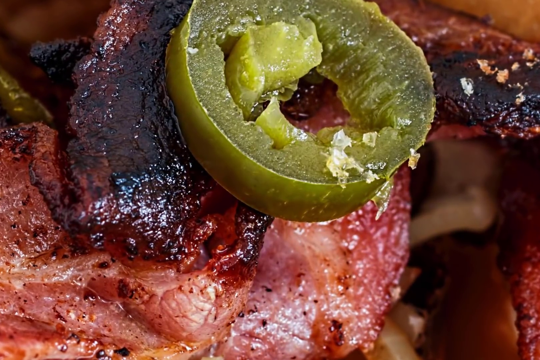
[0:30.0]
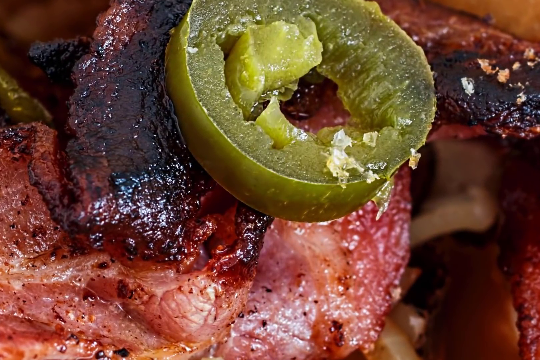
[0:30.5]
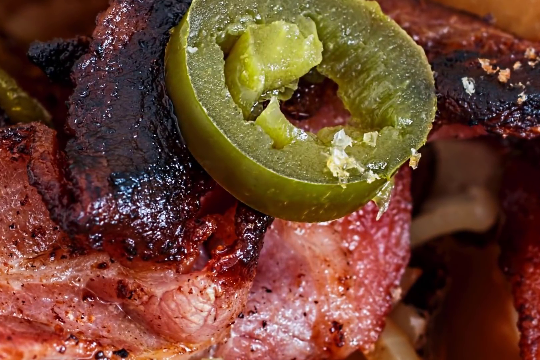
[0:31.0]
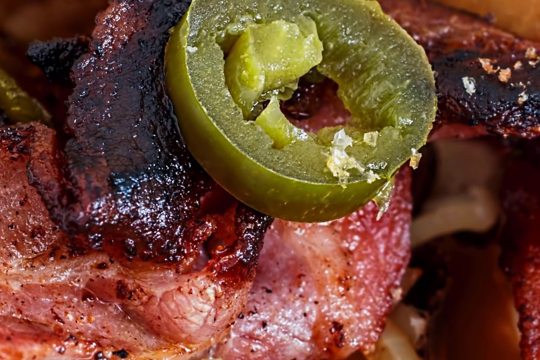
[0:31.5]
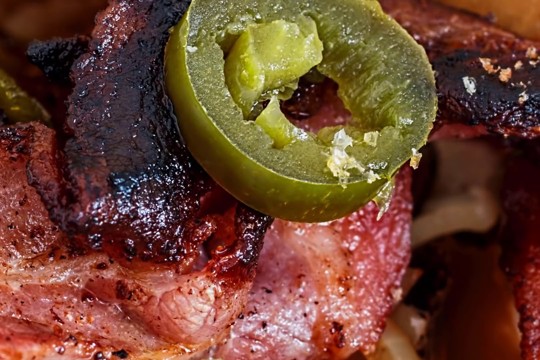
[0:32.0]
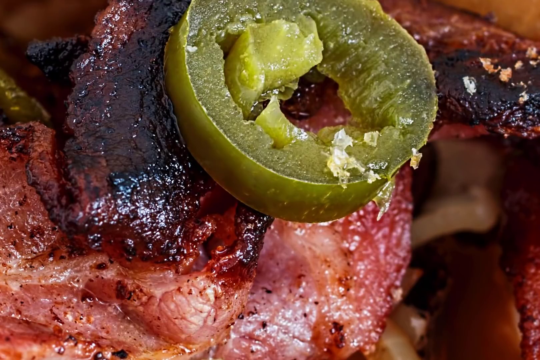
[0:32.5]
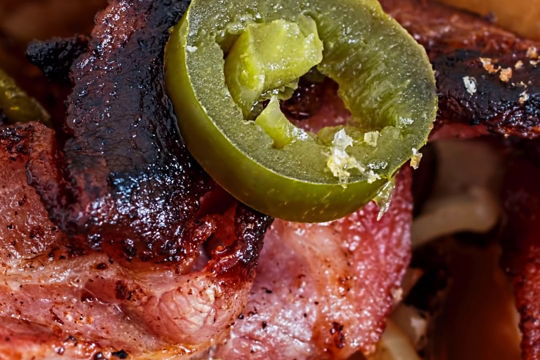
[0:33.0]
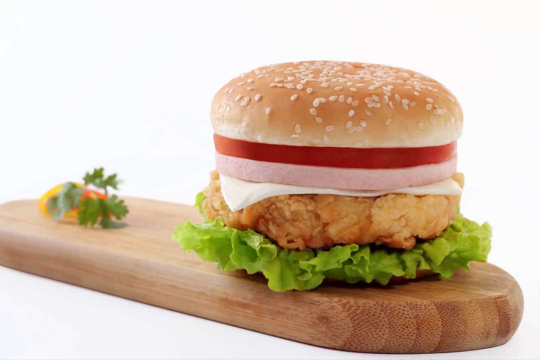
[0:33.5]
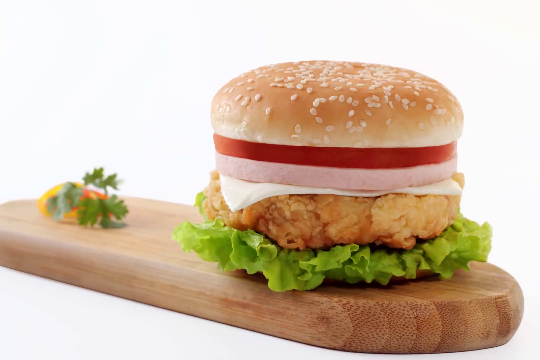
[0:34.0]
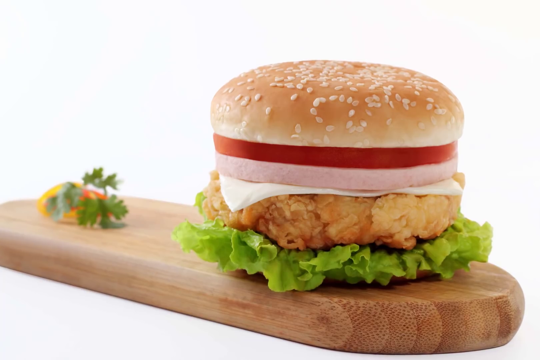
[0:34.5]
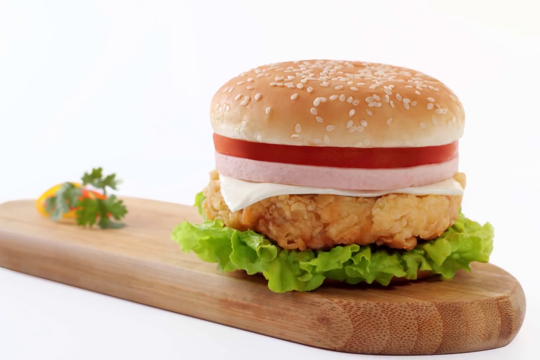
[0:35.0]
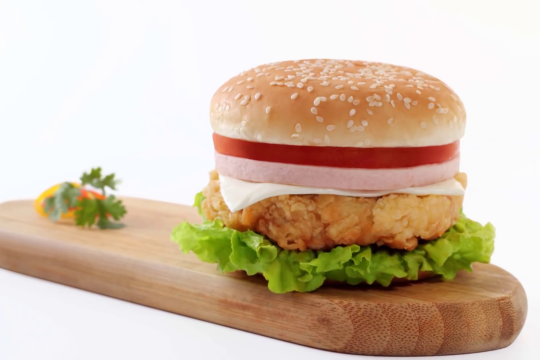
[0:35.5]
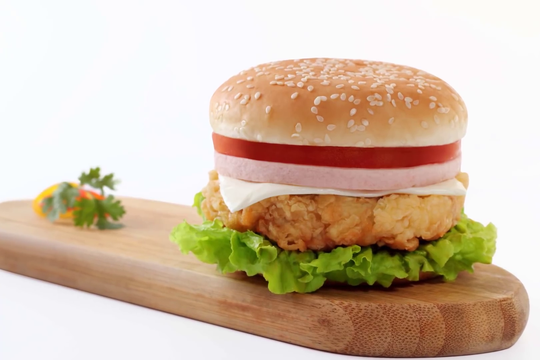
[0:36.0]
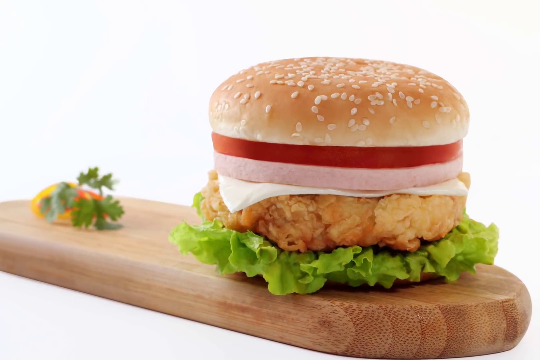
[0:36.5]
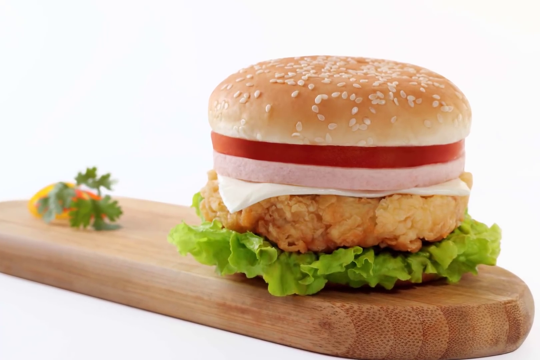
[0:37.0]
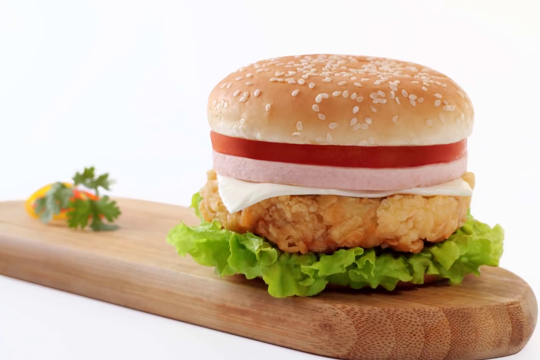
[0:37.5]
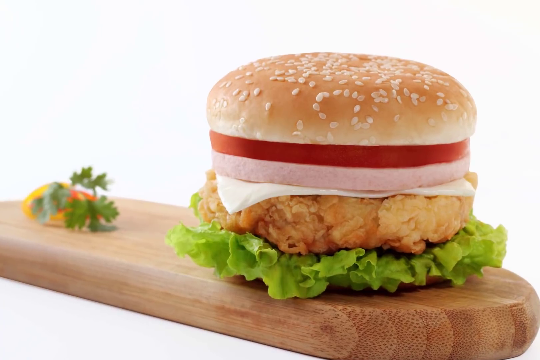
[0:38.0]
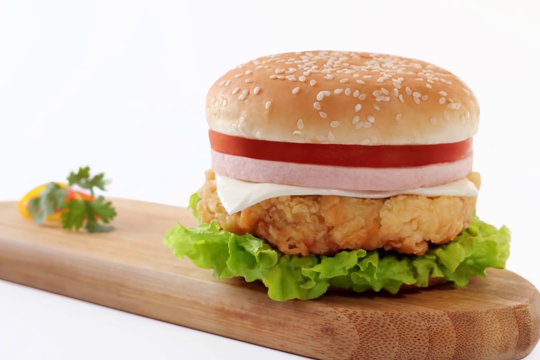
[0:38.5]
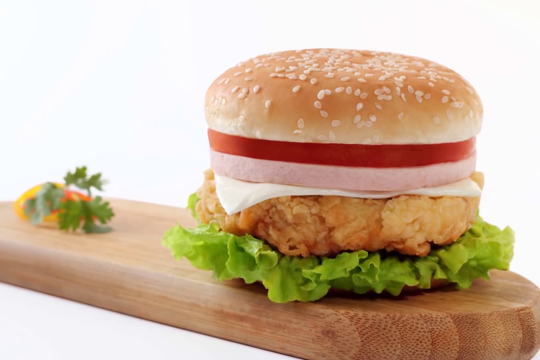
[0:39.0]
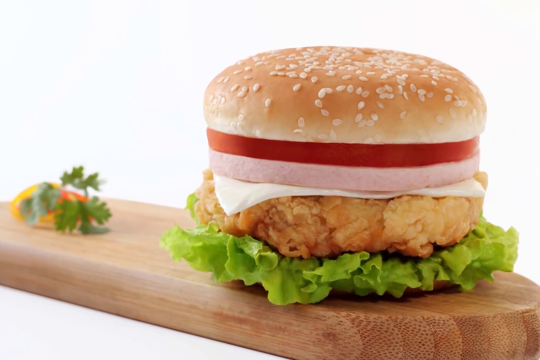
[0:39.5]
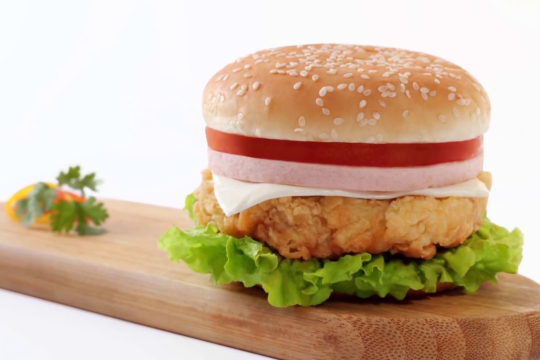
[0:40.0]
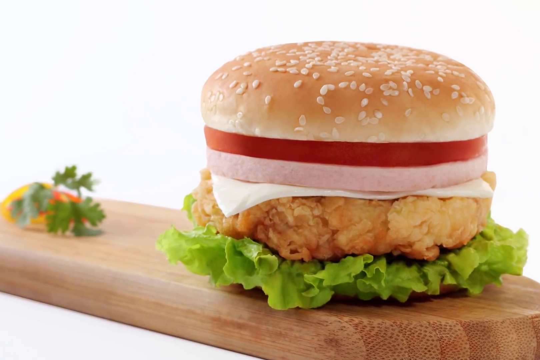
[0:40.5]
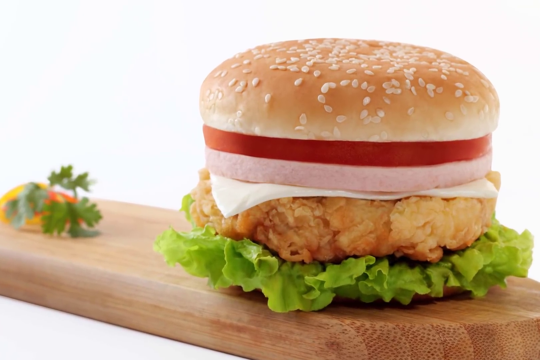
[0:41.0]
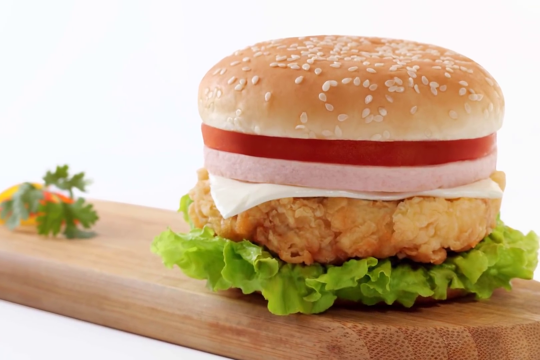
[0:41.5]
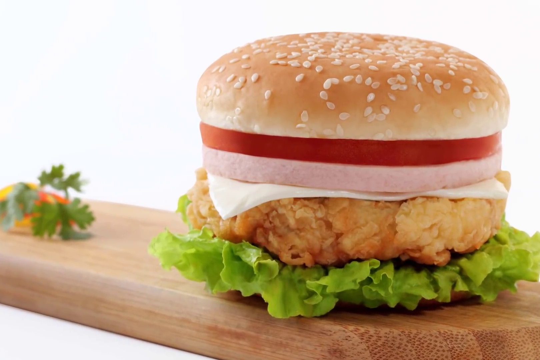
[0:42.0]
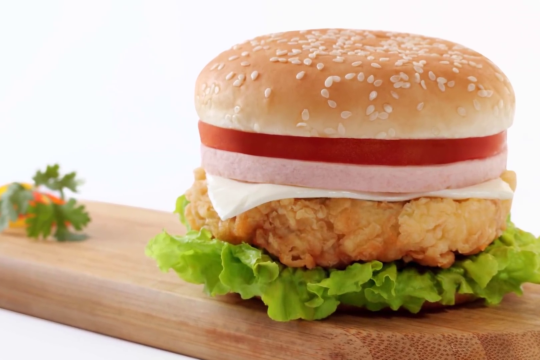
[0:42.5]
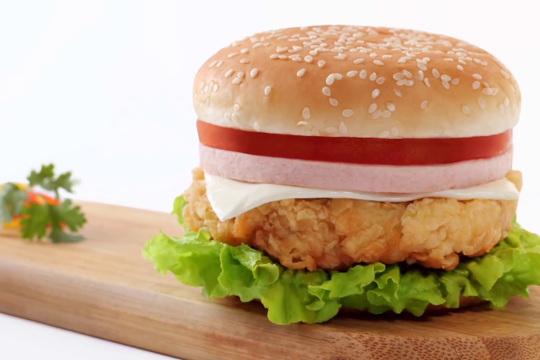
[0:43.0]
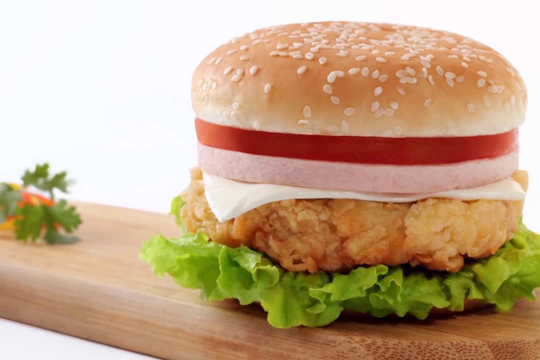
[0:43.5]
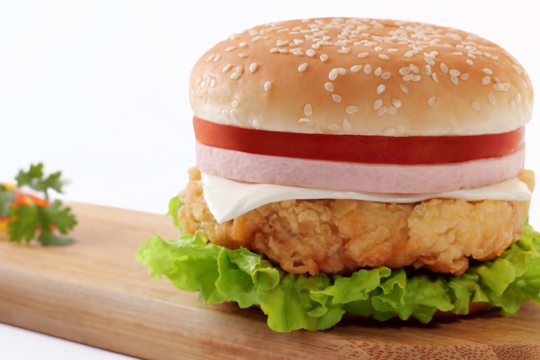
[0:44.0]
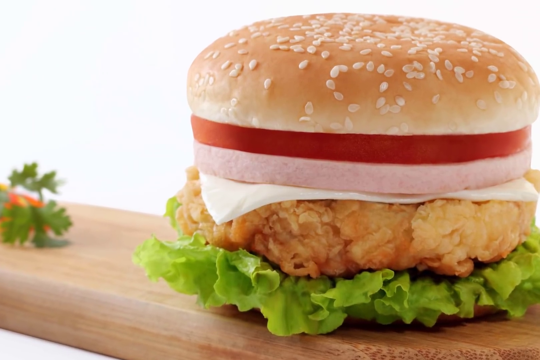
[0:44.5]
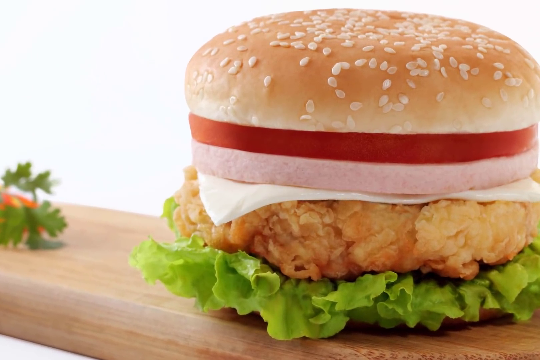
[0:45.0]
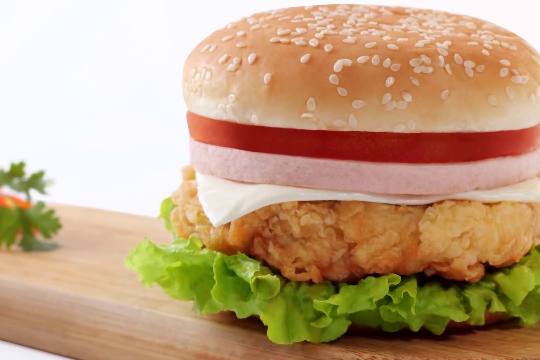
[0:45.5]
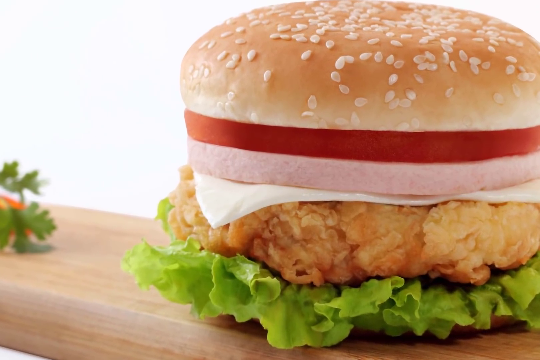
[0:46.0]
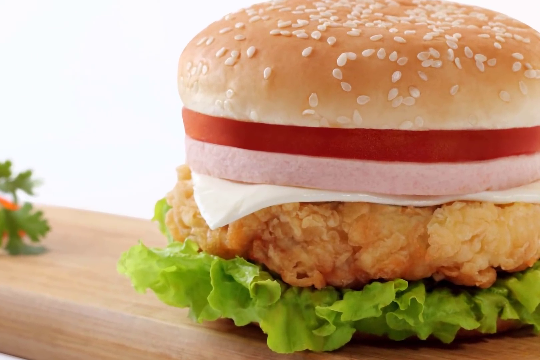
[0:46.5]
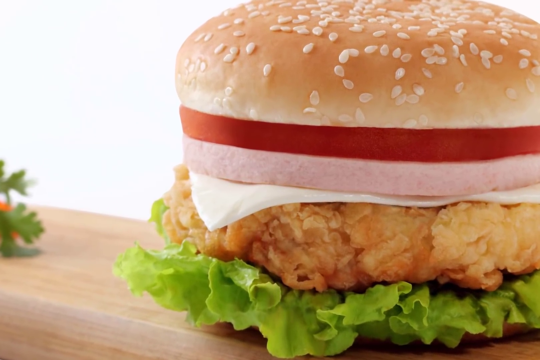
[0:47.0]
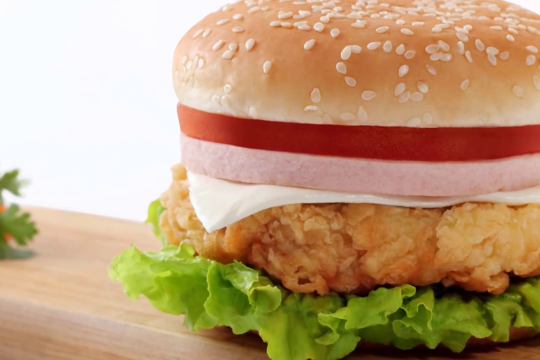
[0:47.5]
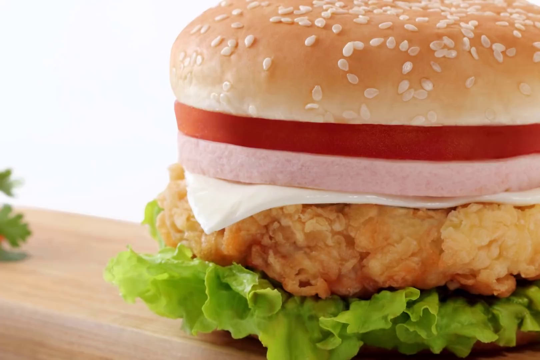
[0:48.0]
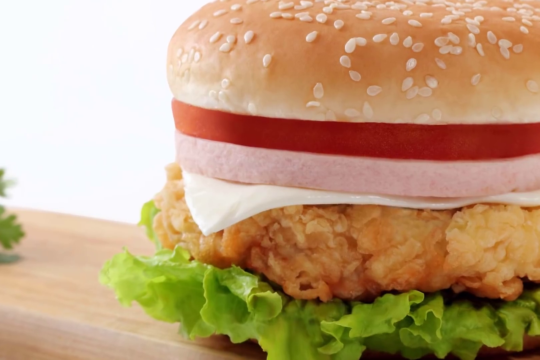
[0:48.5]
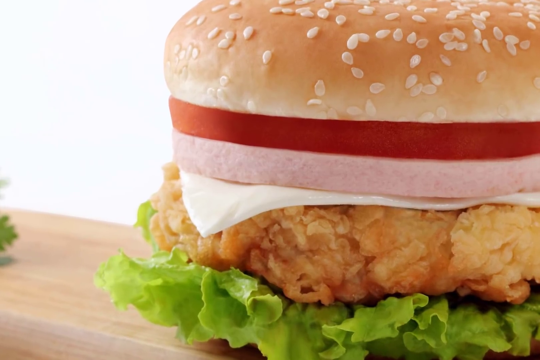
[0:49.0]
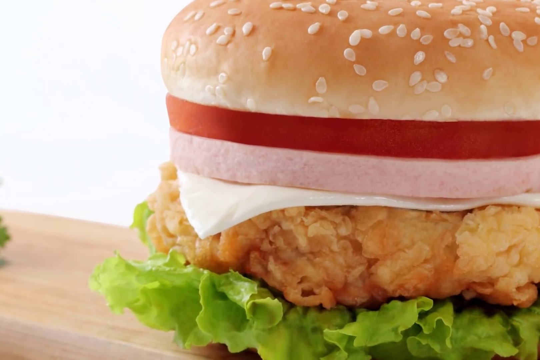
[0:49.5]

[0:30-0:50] A bagel with tomato, ham, cheese, mozzarella cheese and chicken is shown, and it looks juicy. Potato chips with spice and a little salt appear, looking nicely baked.